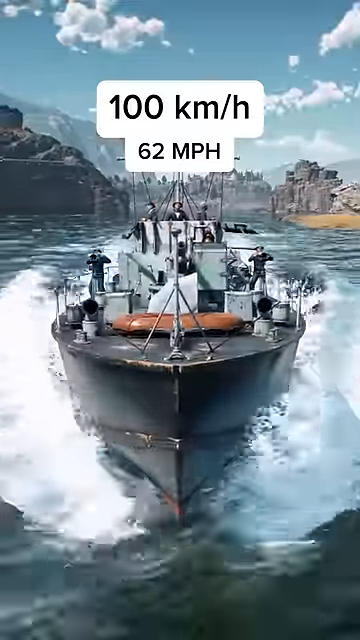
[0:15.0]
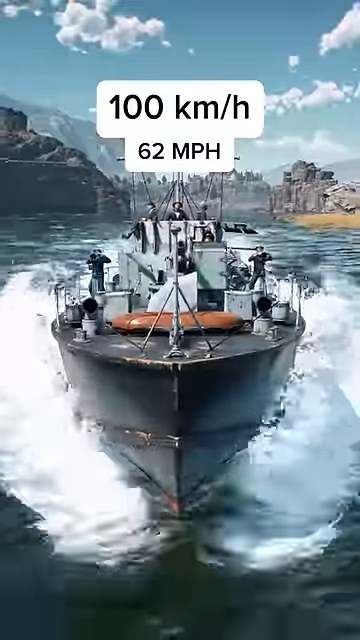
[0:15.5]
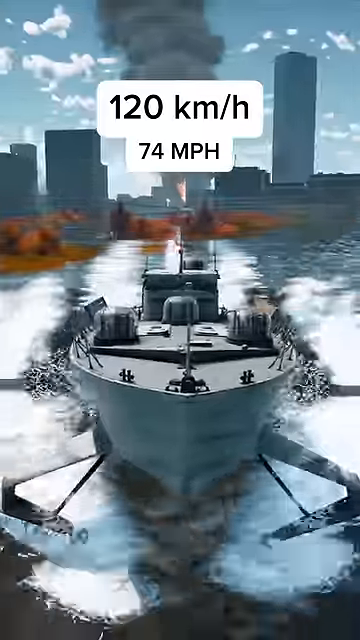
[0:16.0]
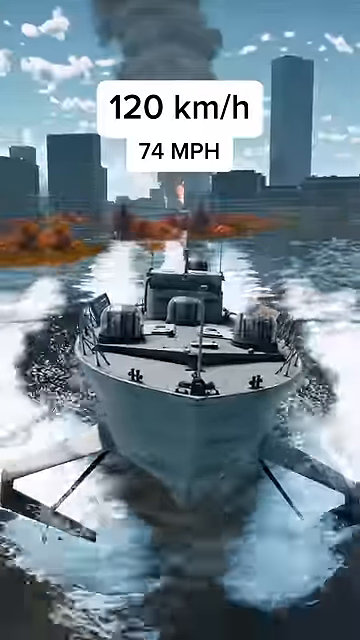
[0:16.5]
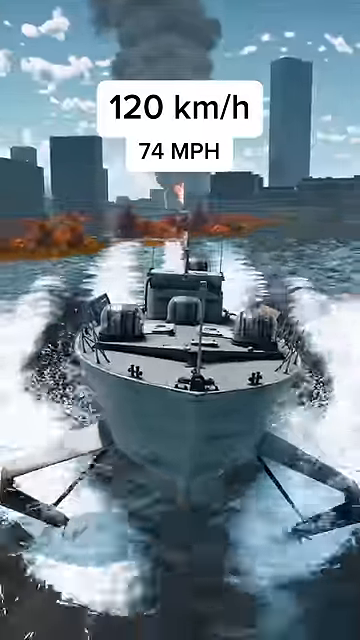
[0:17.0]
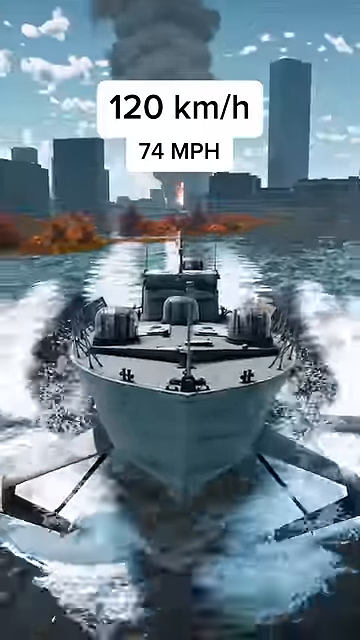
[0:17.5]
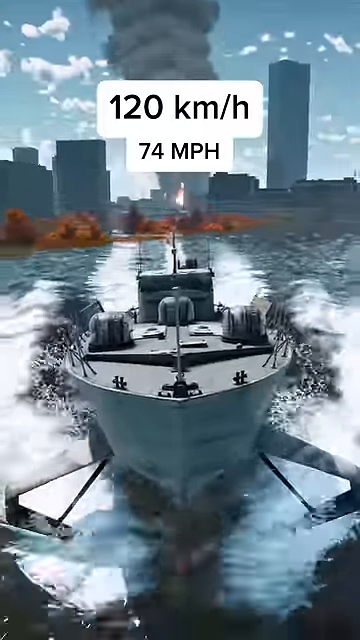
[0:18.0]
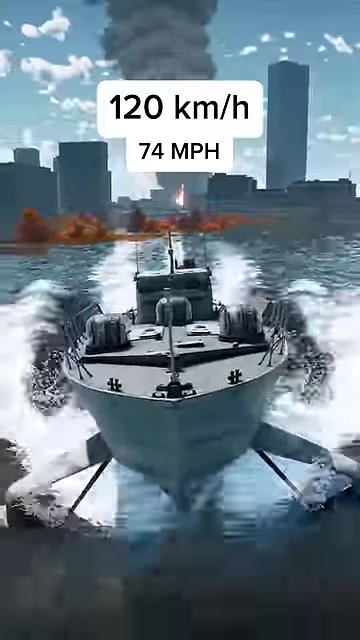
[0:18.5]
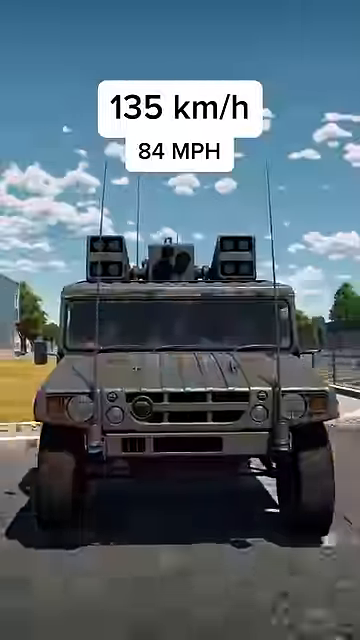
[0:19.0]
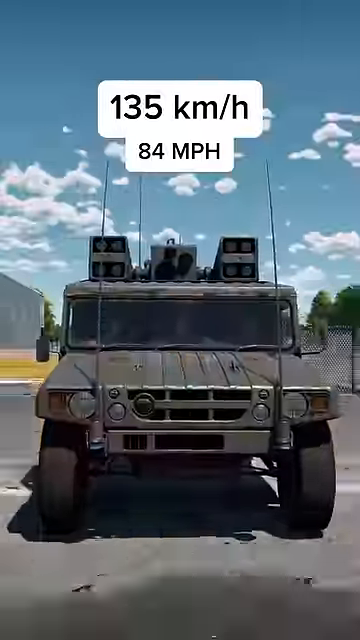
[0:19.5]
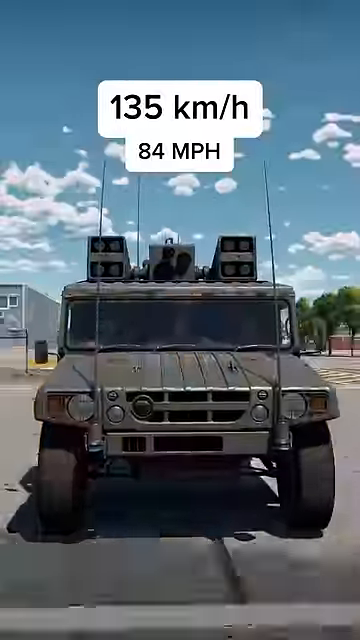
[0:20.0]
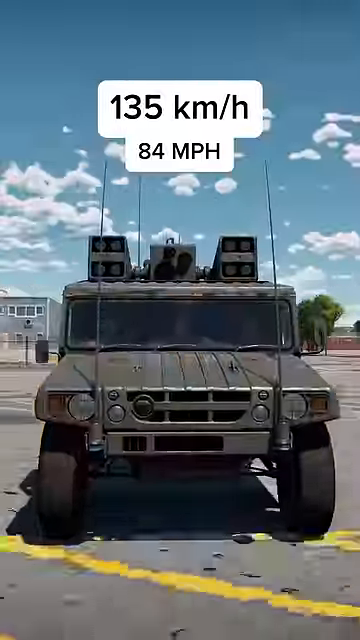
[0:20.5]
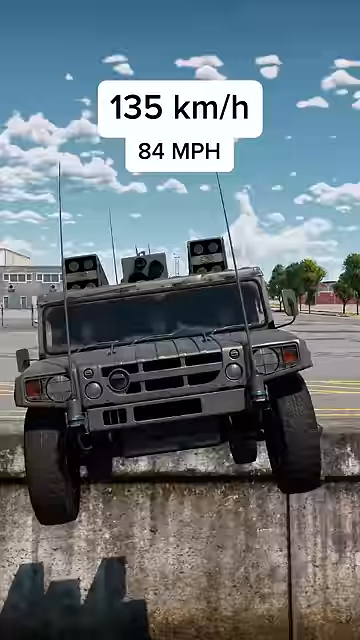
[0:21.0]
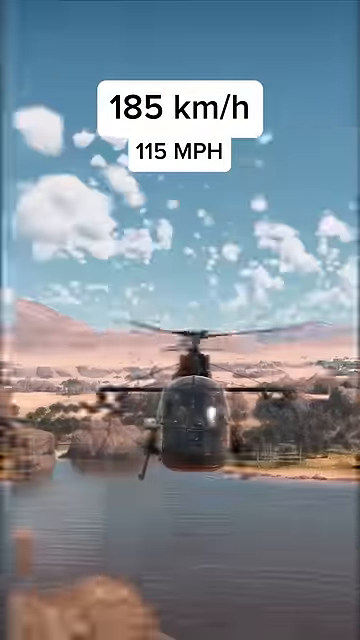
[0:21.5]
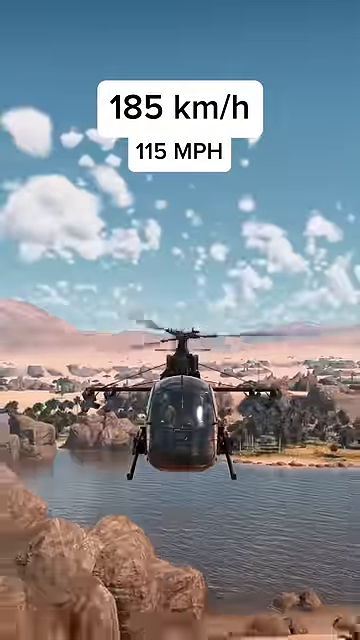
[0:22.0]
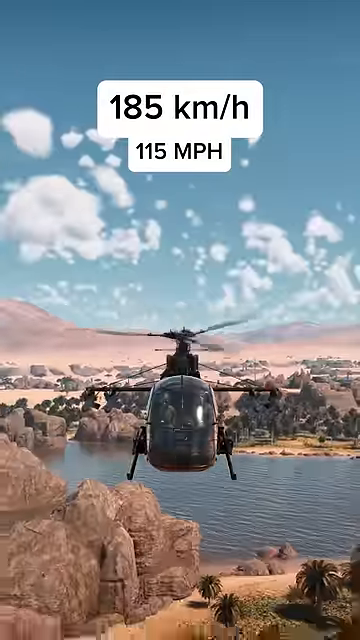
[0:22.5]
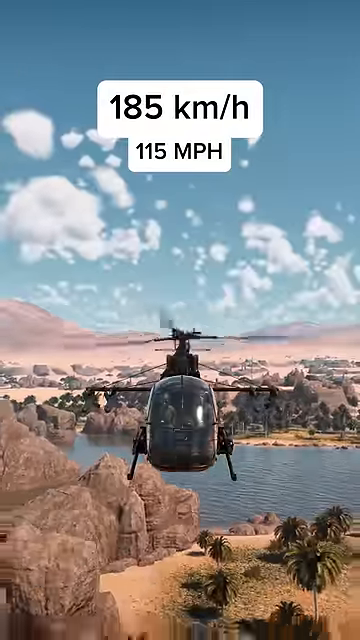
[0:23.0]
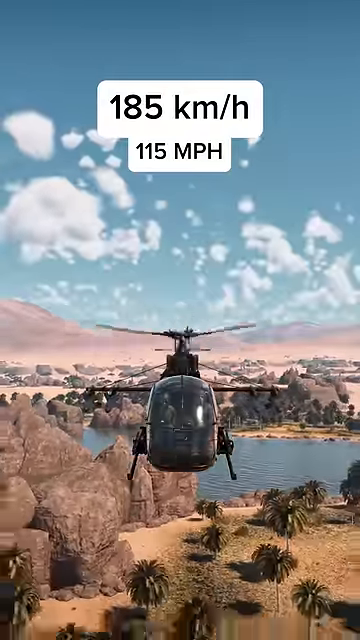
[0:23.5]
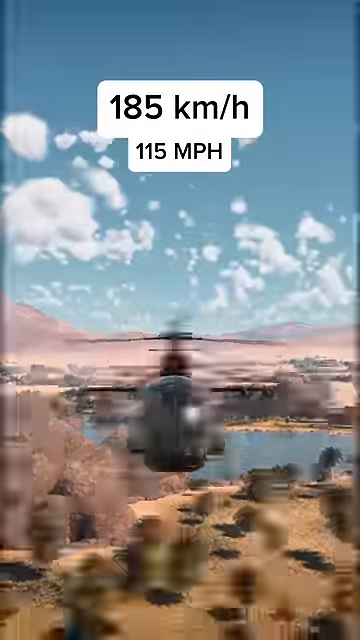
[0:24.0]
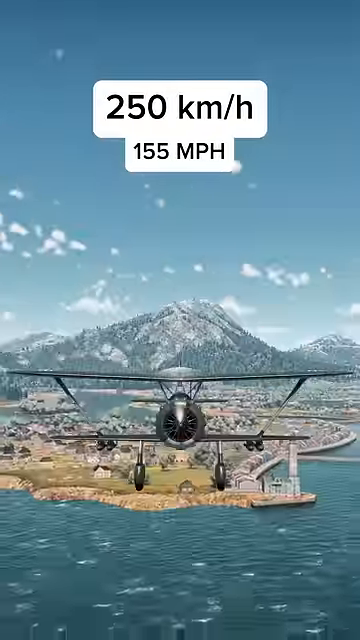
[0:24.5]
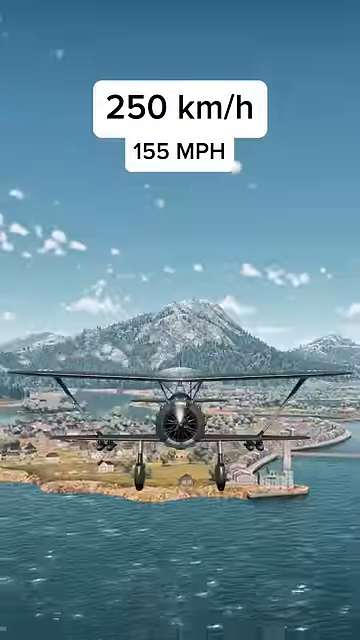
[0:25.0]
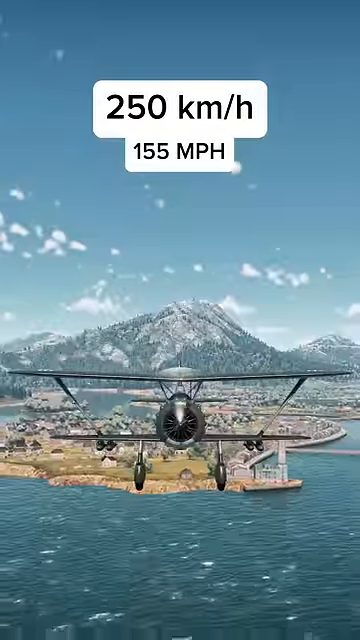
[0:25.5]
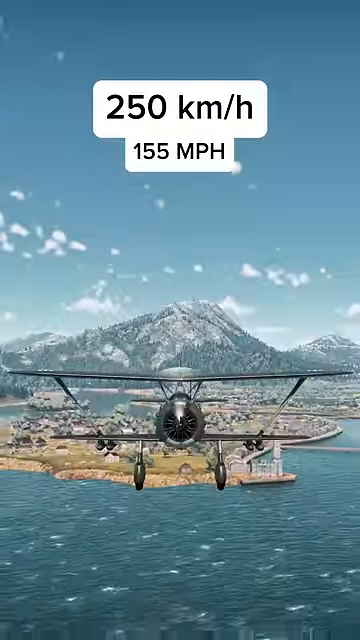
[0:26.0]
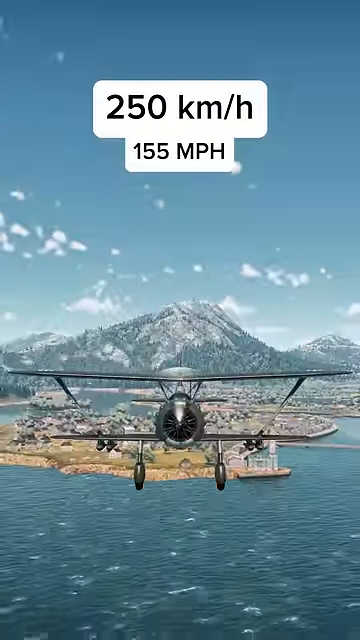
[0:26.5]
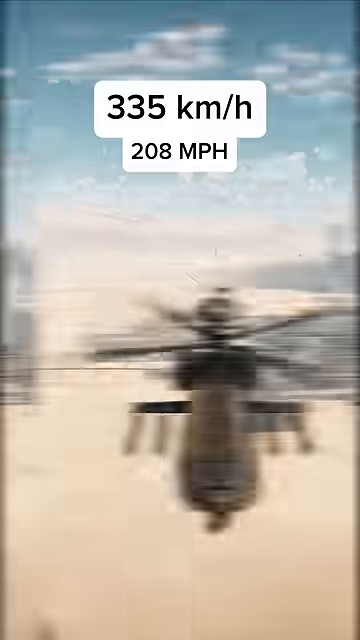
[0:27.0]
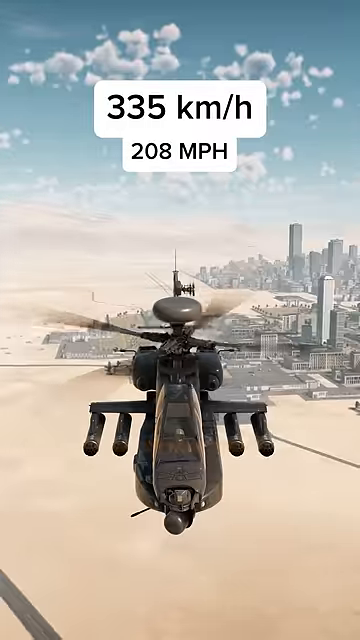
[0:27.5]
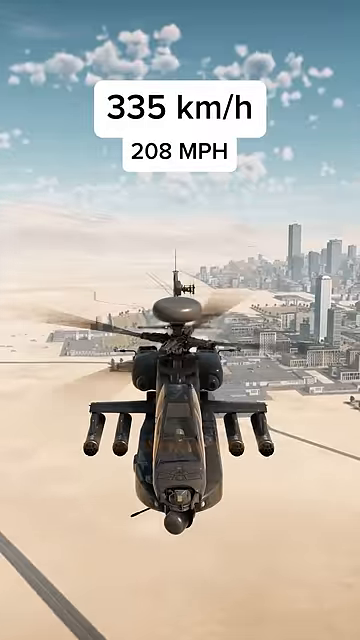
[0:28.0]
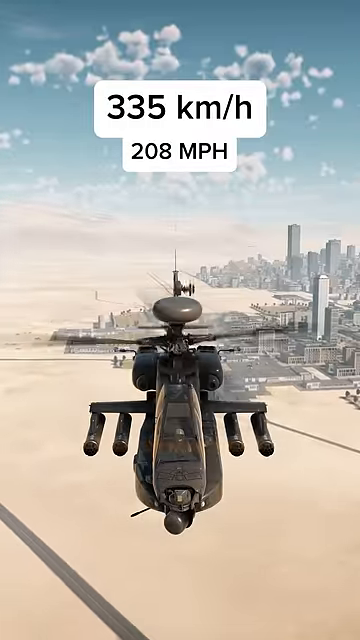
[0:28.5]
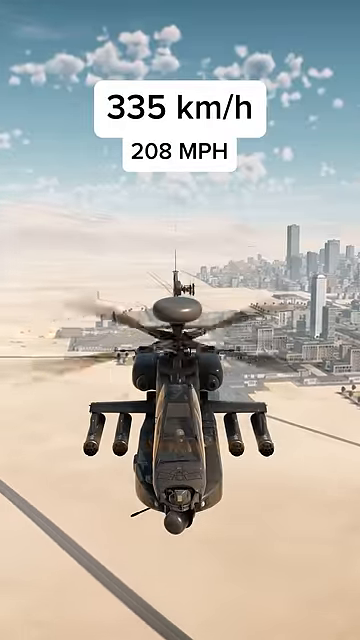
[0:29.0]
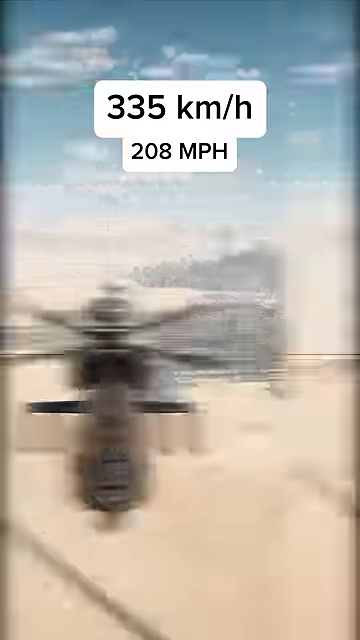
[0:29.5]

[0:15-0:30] Seven or eight different types of War Thunder craft appear, each with an increasing speed: ships, a hydrofoil, a jeep, a helicopter, a biplane and a plane. Their speeds are given in kilometers per hour or miles per hour, and the background varies from one apparatus to the next. First is a ship out on the water moving at 100 kilometers per hour. Then comes a hydrofoil doing 120 kilometers per hour, a jeep at 135 kilometers, and a helicopter at 185 kilometers. After the helicopter there is a biplane doing 250 kilometers, then an attack helicopter at 335, and then a jet at 475 kilometers per hour.